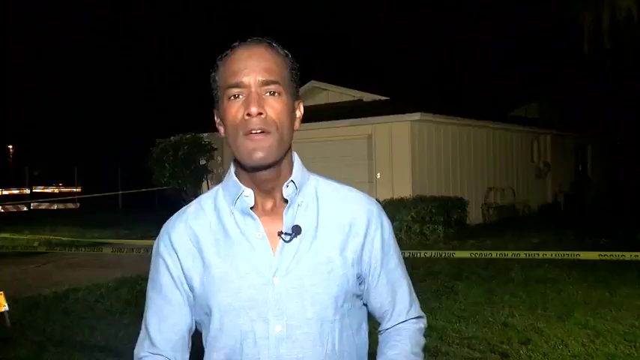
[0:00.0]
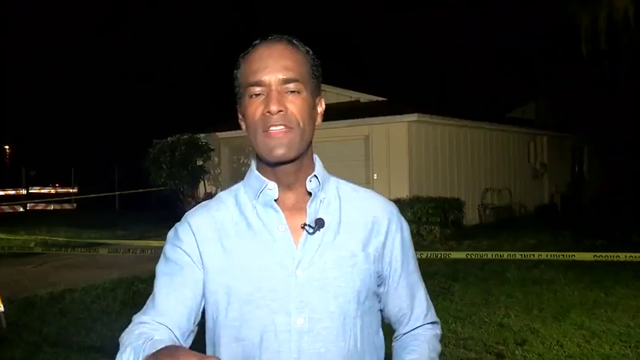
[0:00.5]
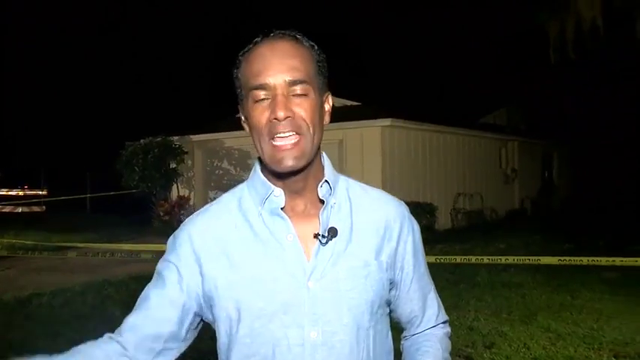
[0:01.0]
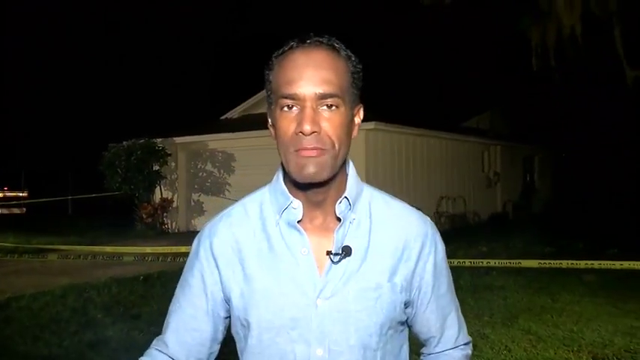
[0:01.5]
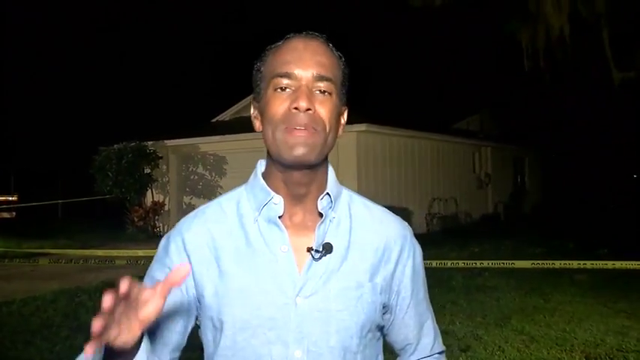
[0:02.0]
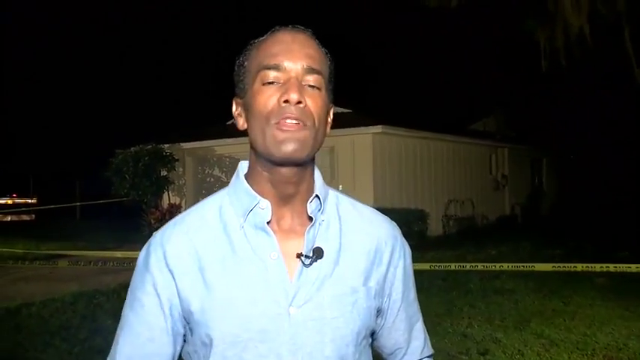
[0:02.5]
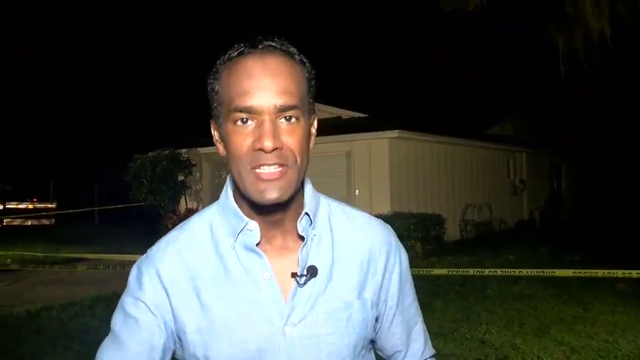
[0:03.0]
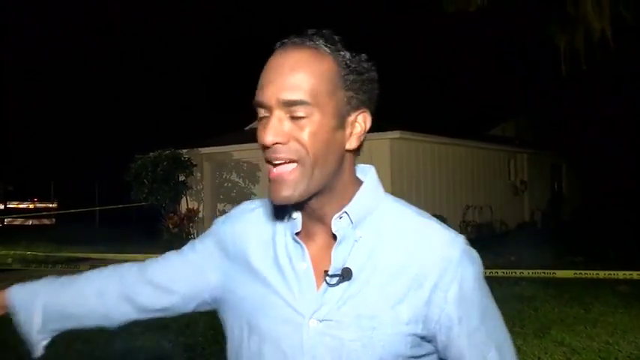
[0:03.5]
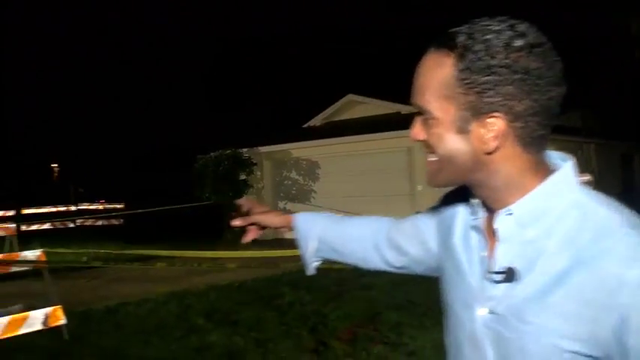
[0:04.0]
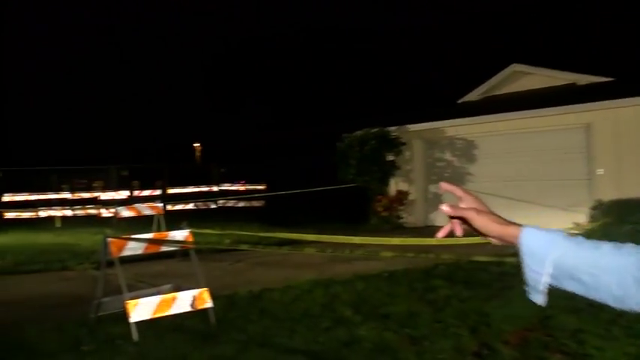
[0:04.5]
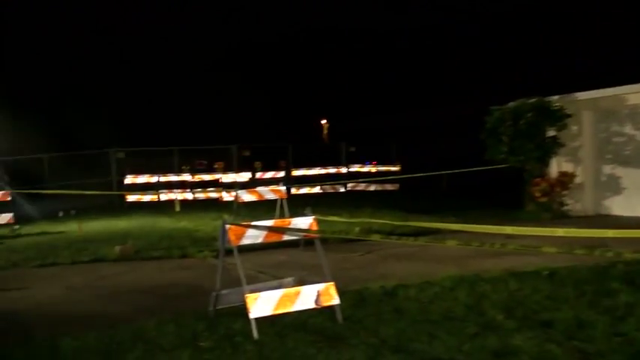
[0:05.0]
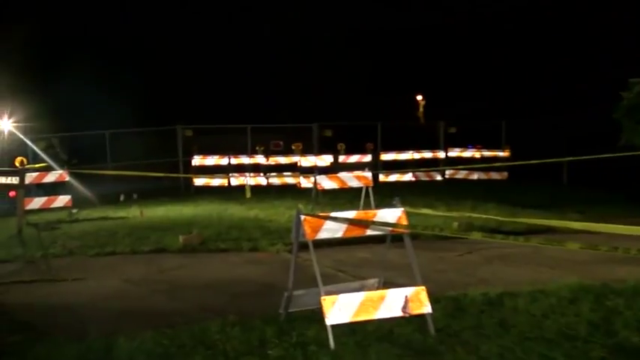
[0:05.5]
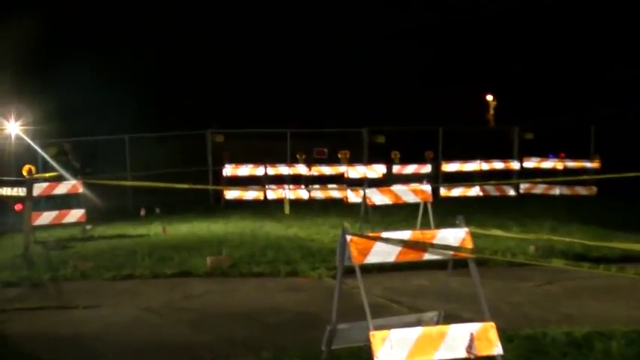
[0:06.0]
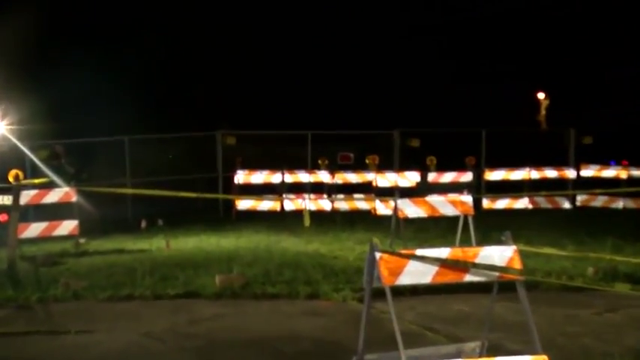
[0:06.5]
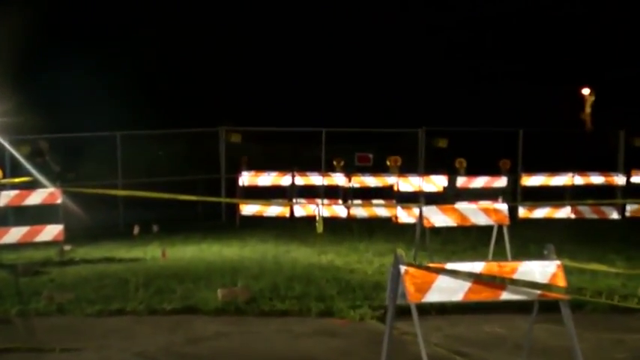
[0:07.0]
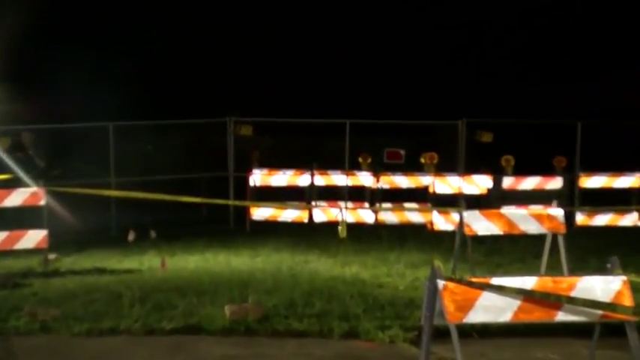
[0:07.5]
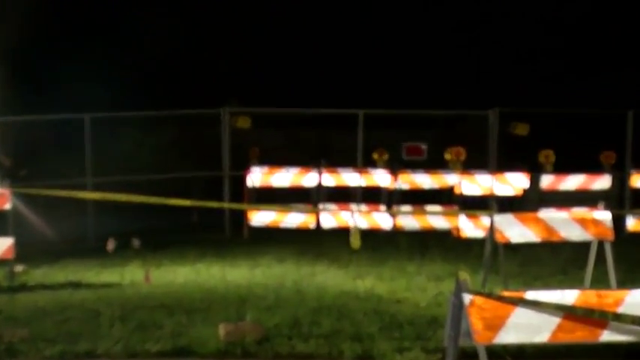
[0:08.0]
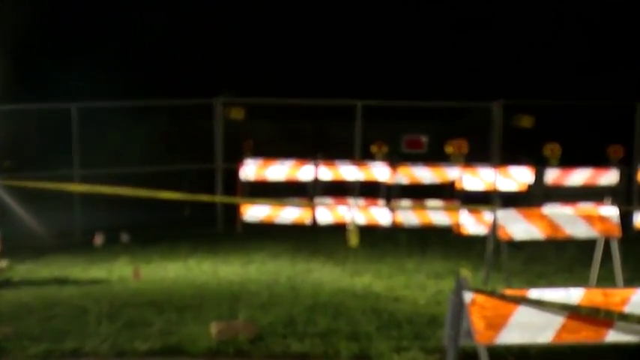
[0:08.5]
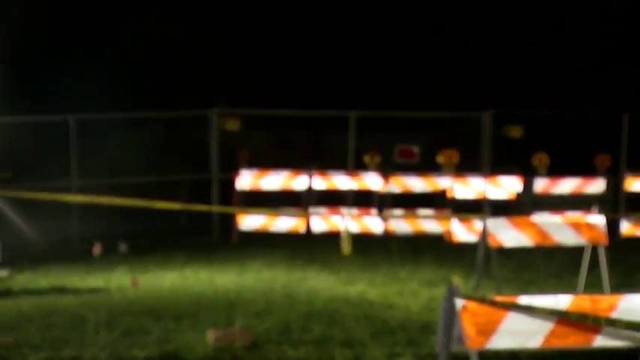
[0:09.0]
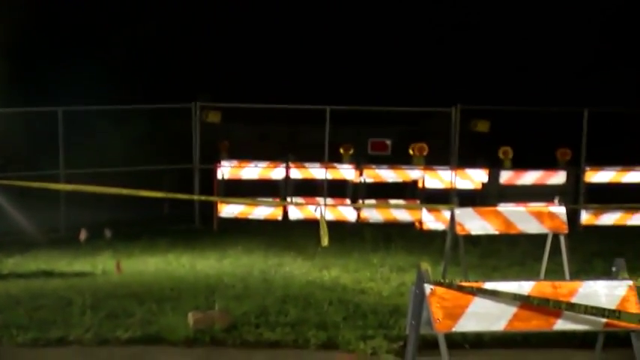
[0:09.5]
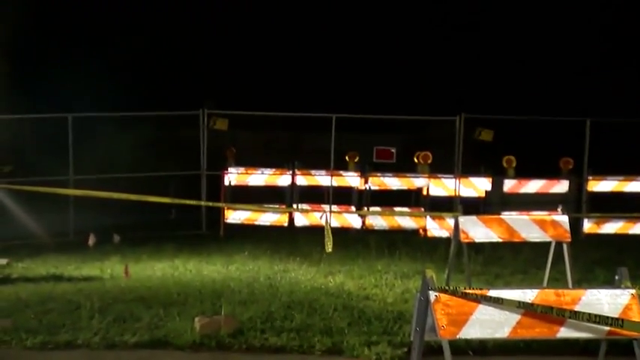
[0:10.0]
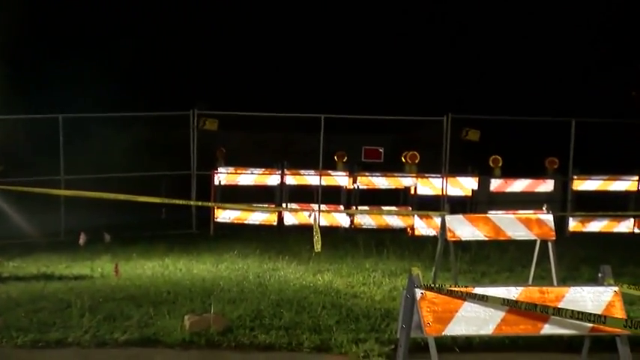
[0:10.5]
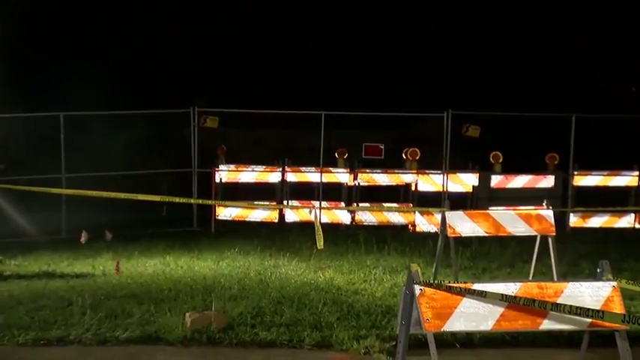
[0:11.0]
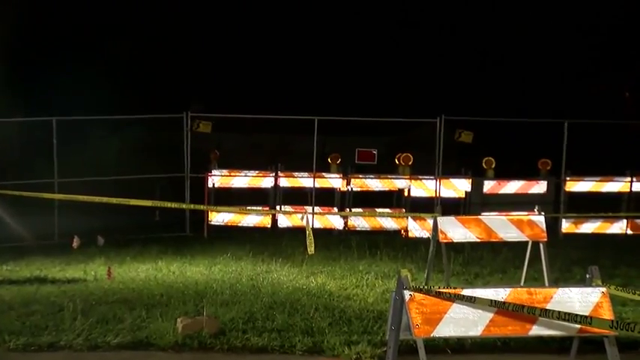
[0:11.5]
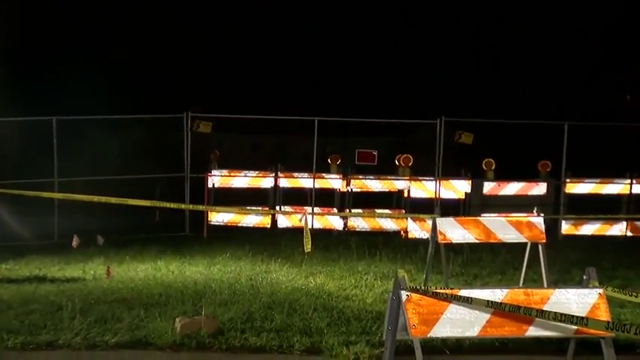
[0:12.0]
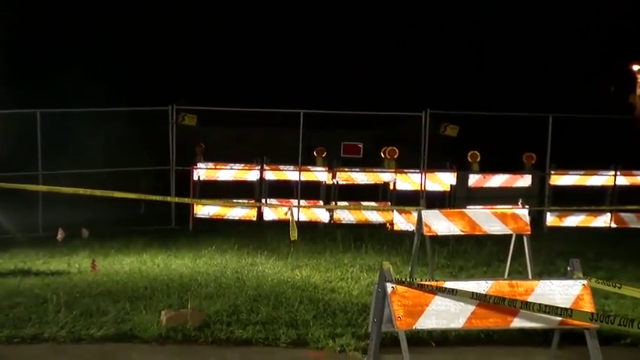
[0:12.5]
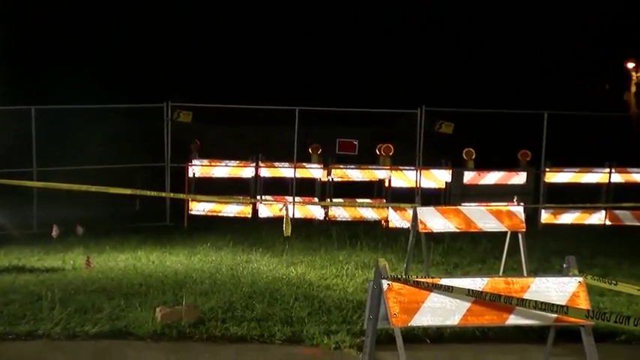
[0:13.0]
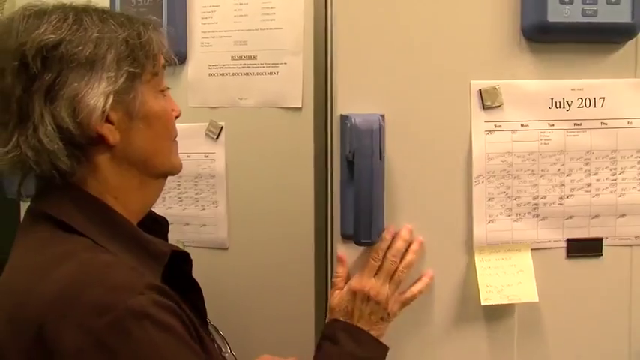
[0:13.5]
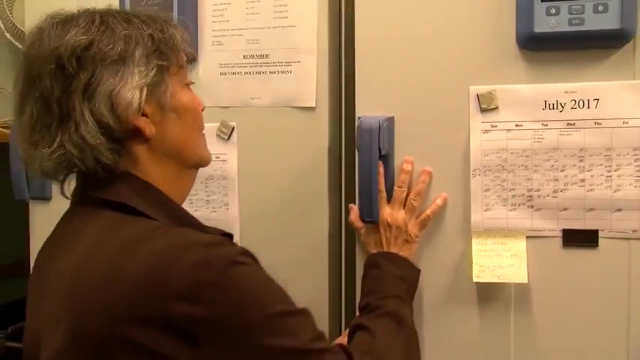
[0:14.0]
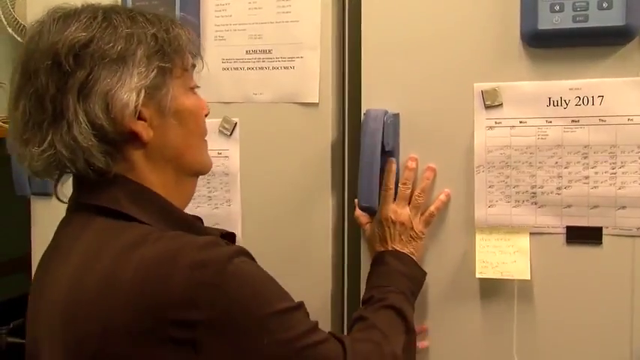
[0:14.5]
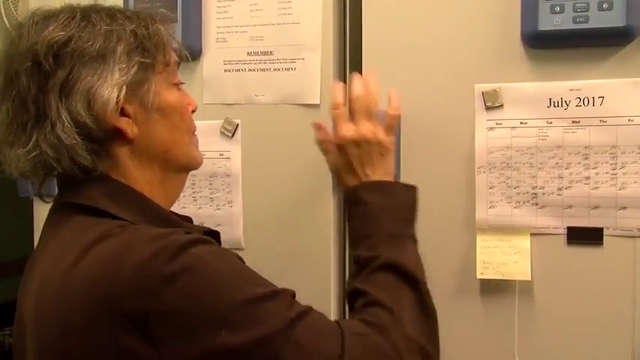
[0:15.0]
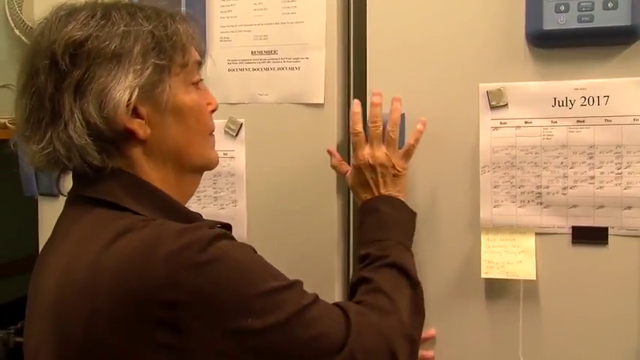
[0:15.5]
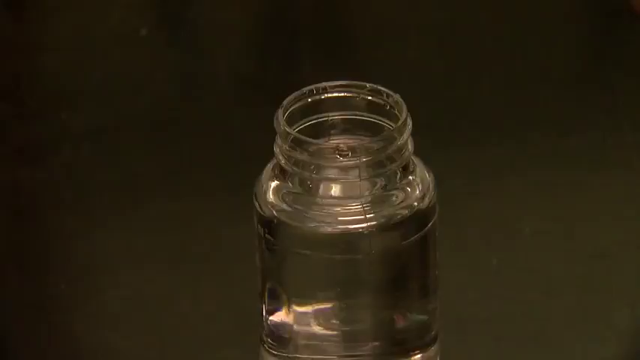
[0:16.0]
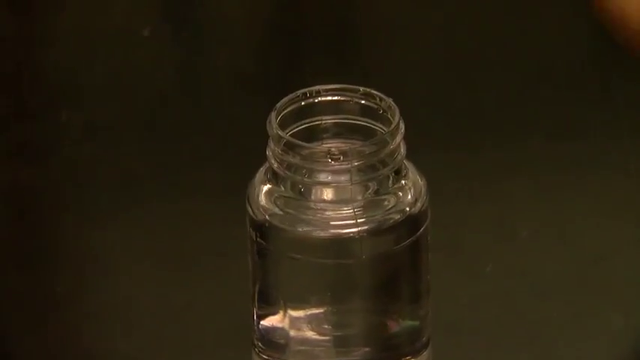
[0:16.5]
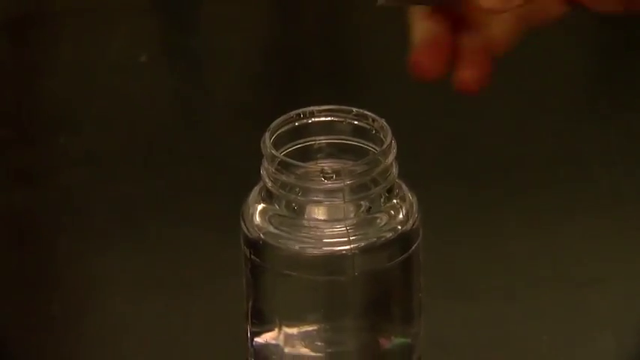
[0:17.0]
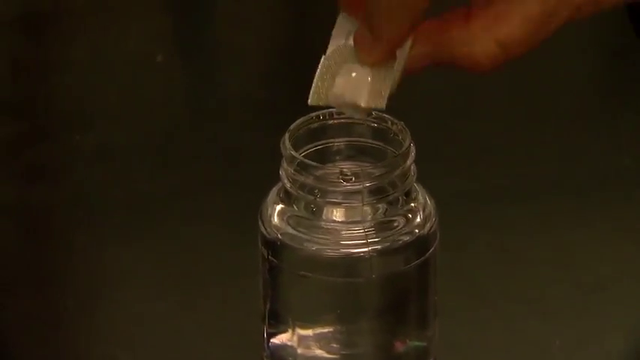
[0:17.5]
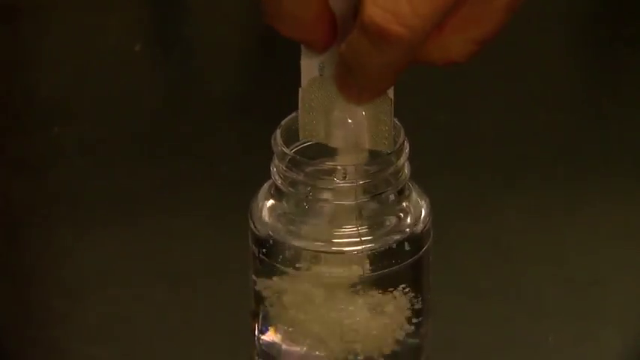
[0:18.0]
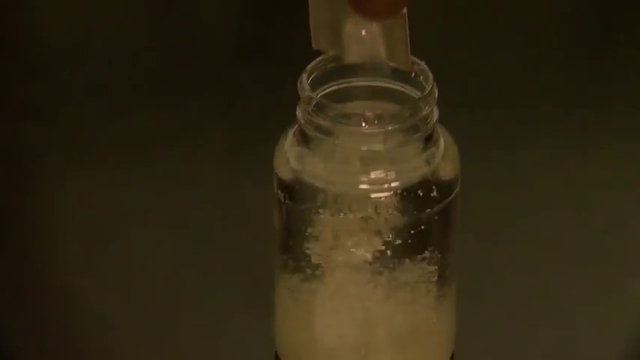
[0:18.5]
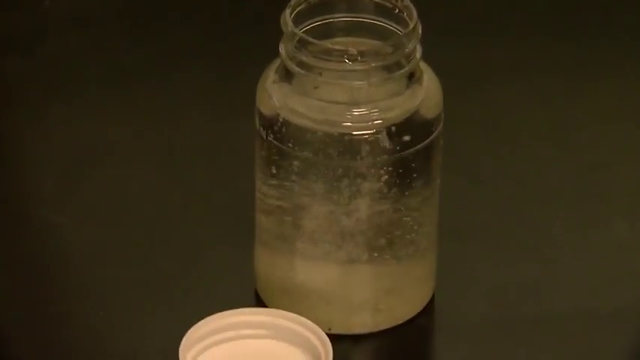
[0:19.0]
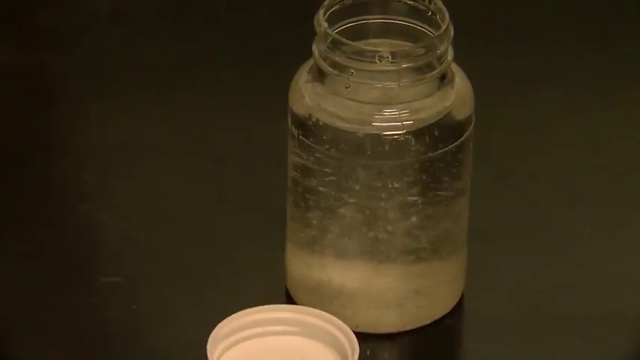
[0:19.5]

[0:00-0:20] A man stands in a restricted area with some buildings, where people are not allowed to go, and points the camera at the disaster that has happened there and caused the restriction. A woman closes a cabinet, and there is a bottle of water; a substance is being poured into the water. The place has been destroyed and left deserted, with things left stranded.